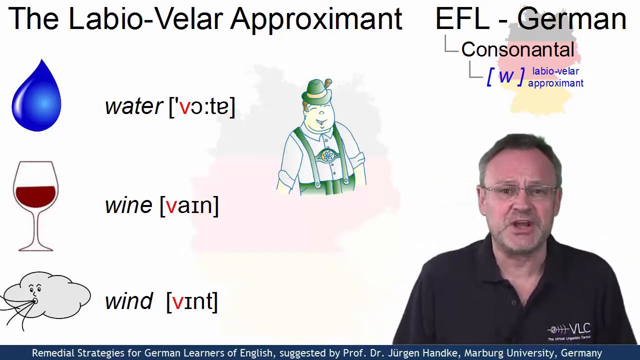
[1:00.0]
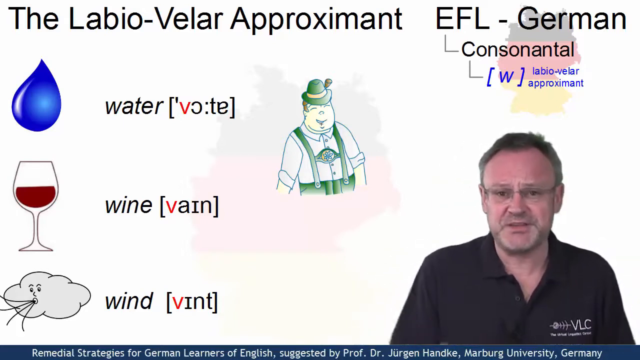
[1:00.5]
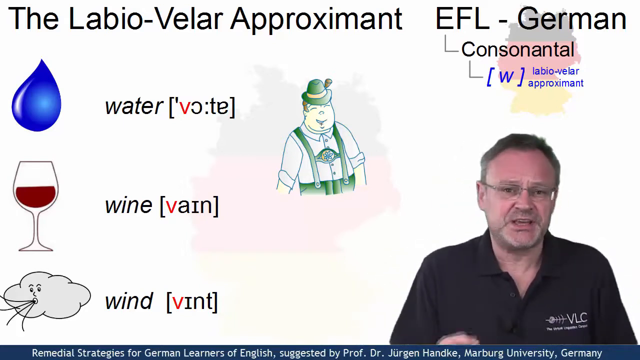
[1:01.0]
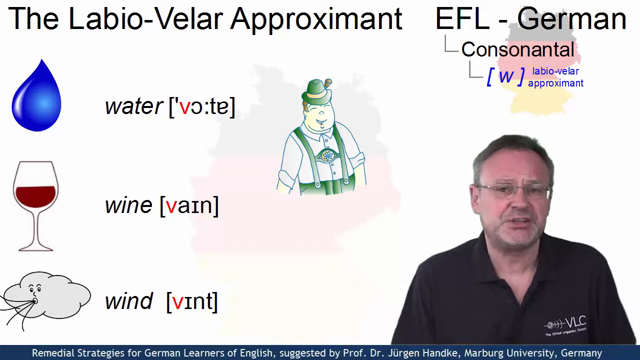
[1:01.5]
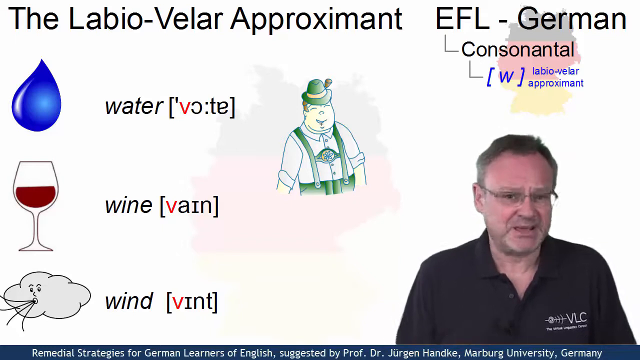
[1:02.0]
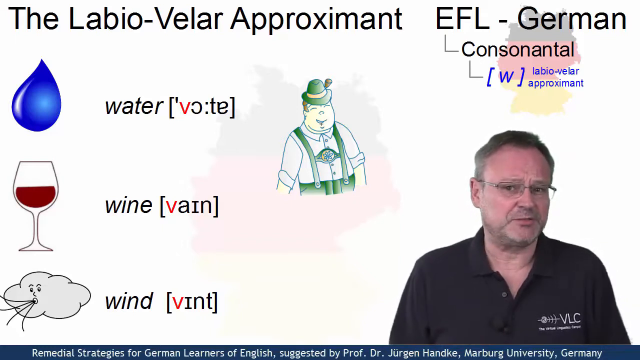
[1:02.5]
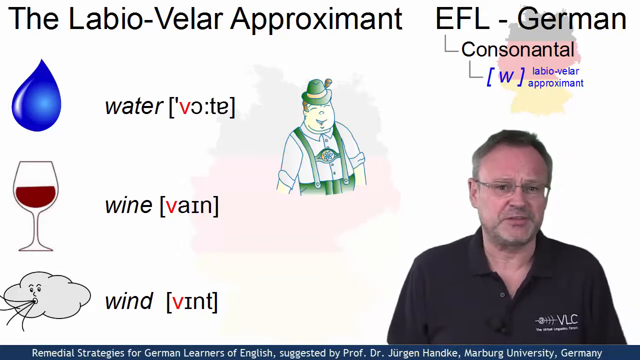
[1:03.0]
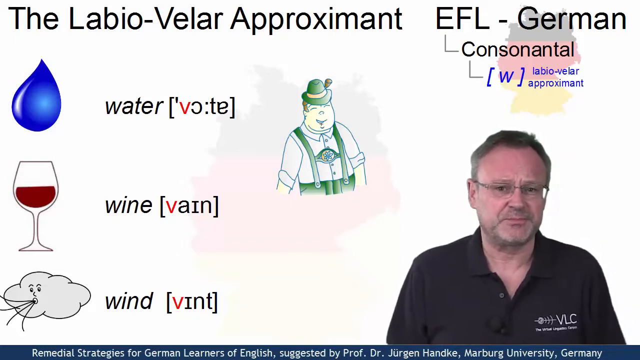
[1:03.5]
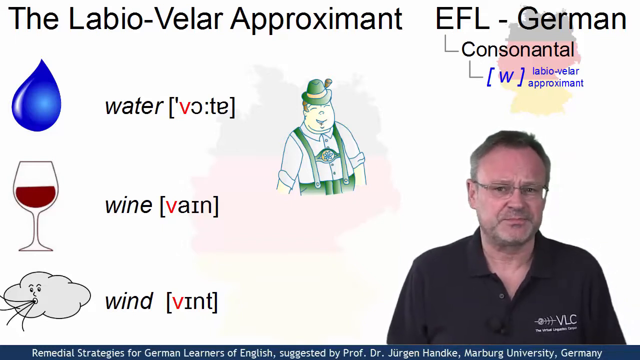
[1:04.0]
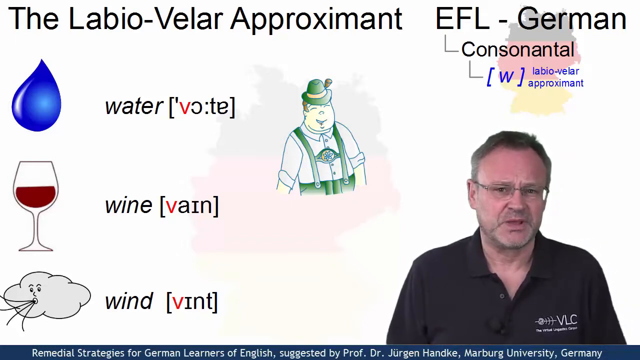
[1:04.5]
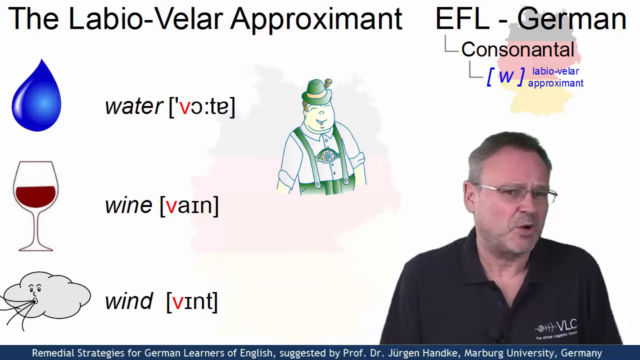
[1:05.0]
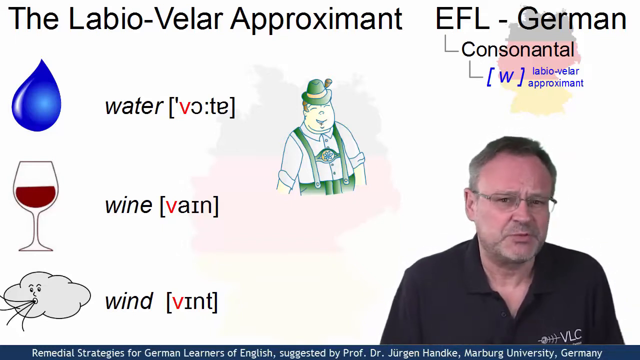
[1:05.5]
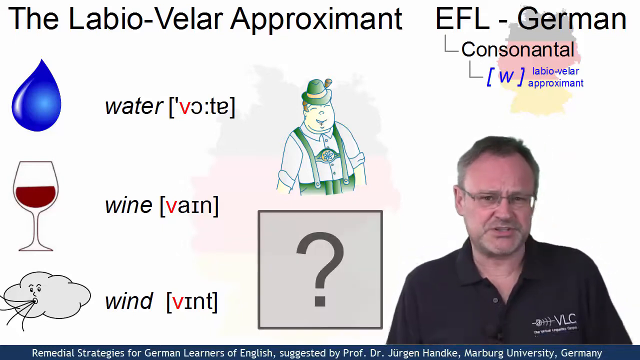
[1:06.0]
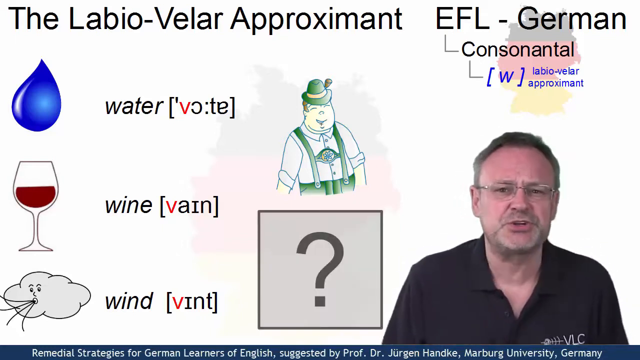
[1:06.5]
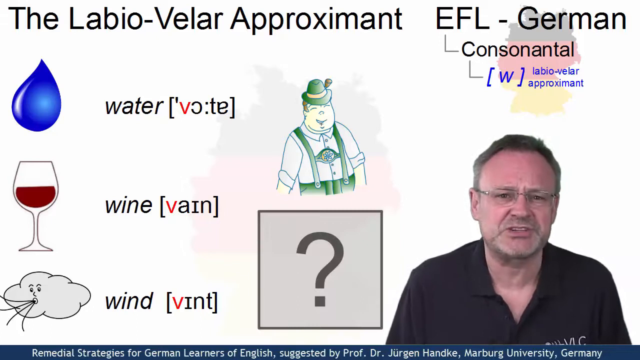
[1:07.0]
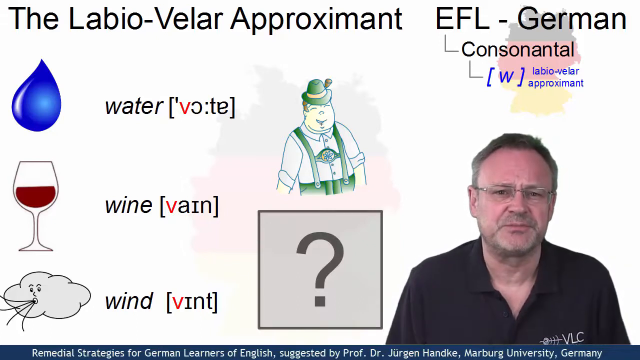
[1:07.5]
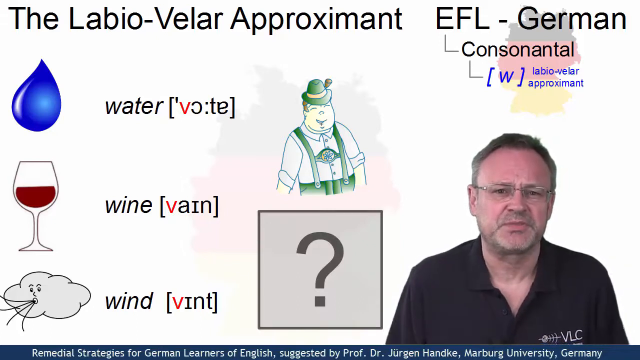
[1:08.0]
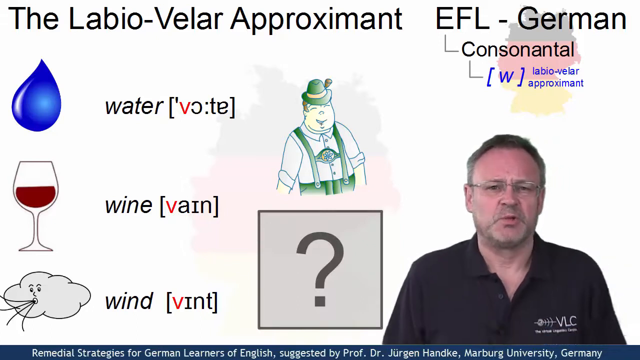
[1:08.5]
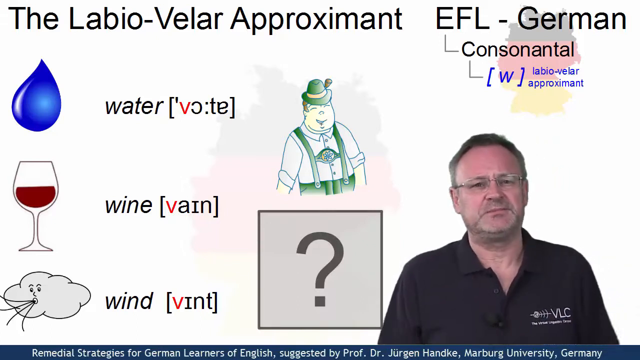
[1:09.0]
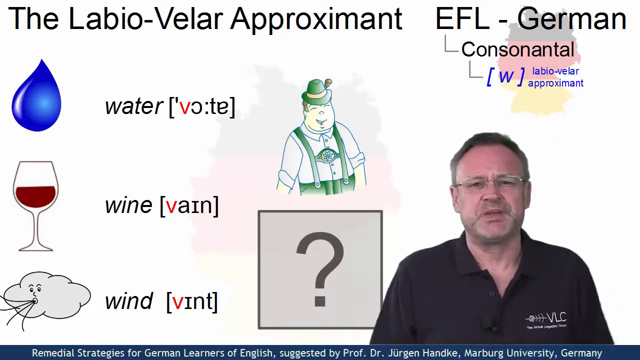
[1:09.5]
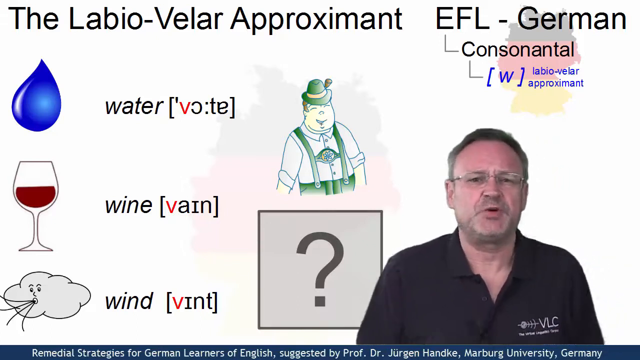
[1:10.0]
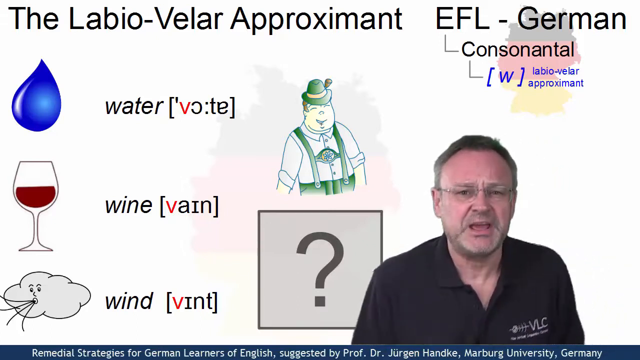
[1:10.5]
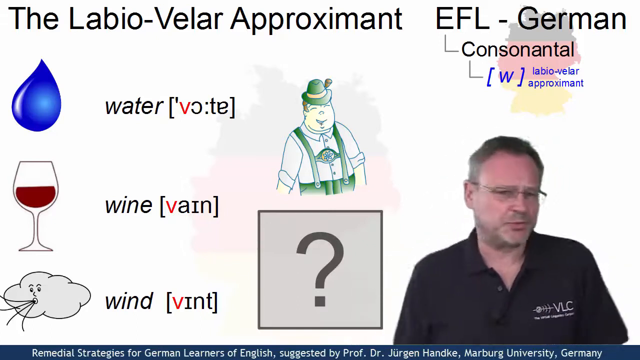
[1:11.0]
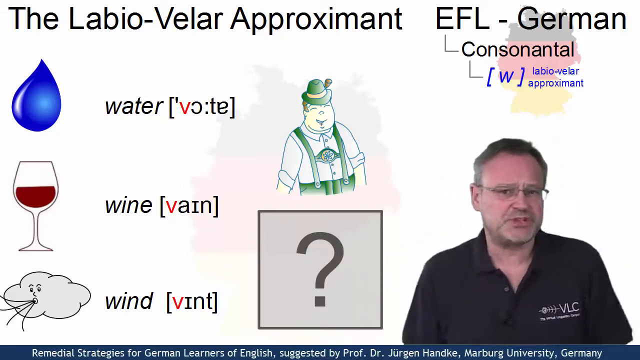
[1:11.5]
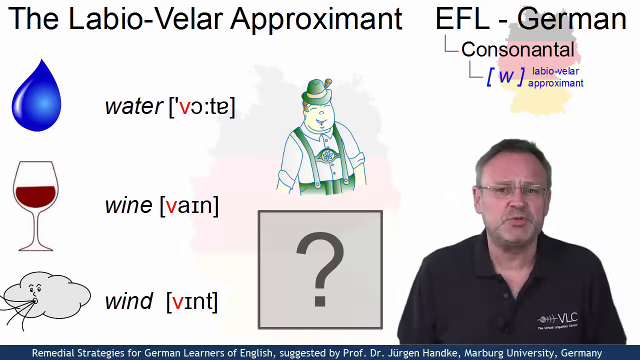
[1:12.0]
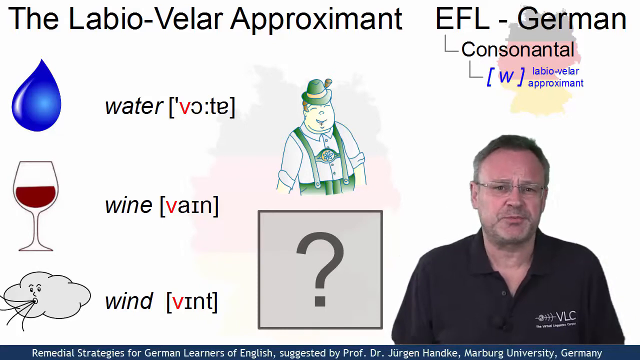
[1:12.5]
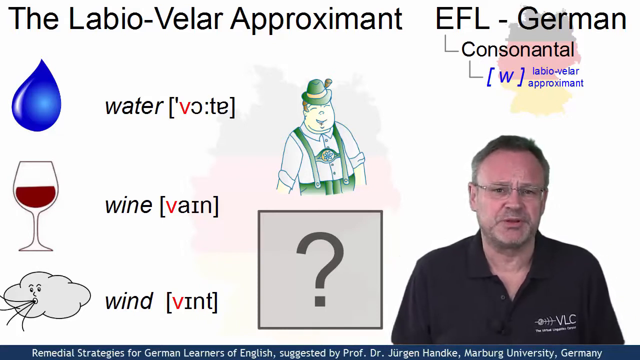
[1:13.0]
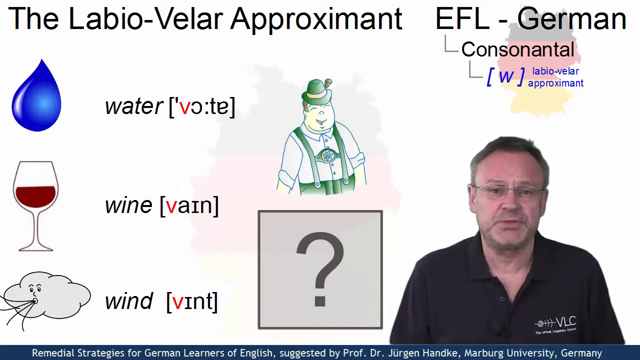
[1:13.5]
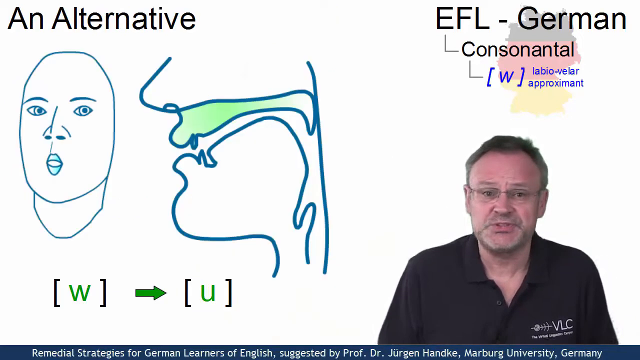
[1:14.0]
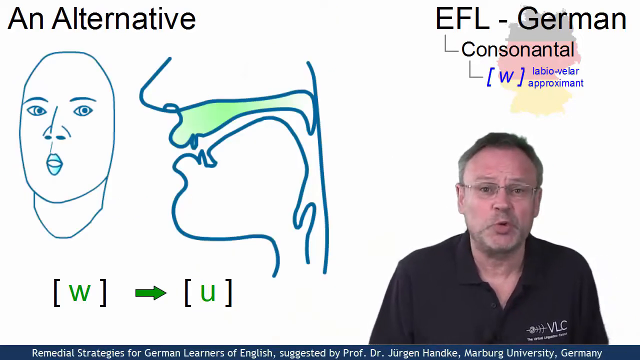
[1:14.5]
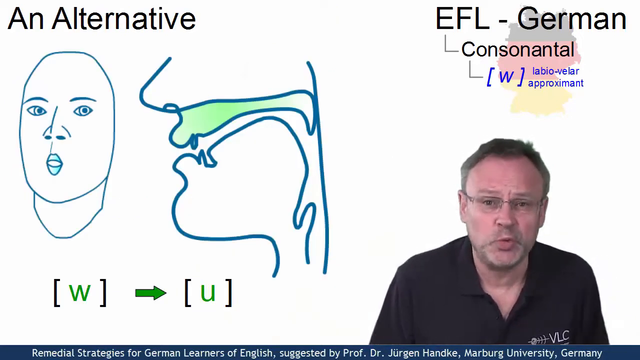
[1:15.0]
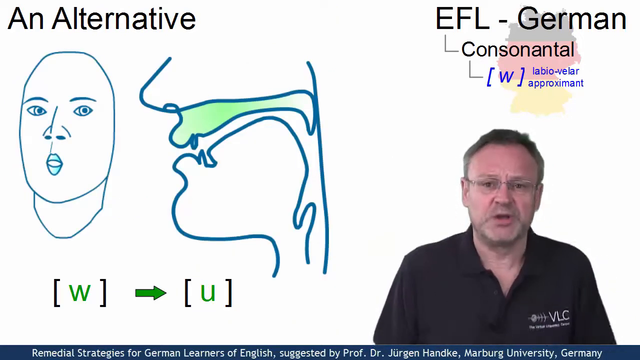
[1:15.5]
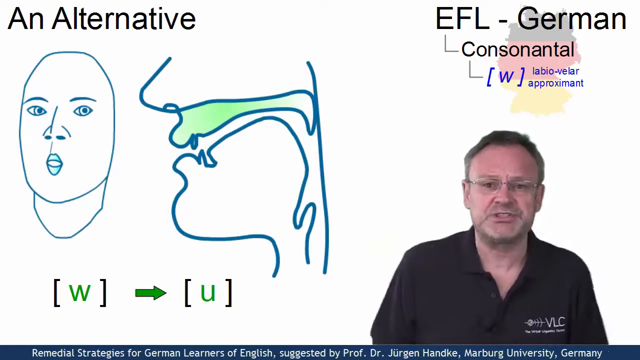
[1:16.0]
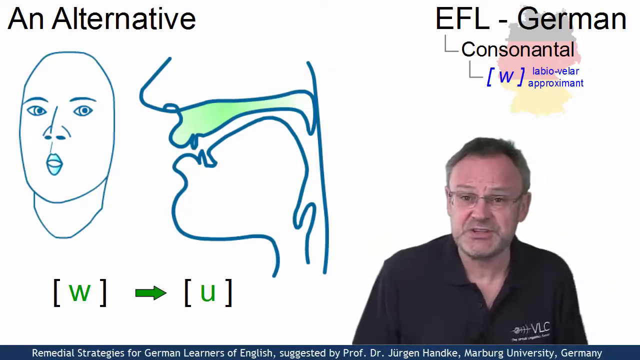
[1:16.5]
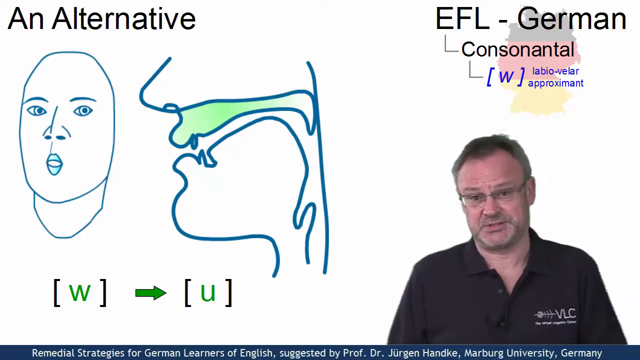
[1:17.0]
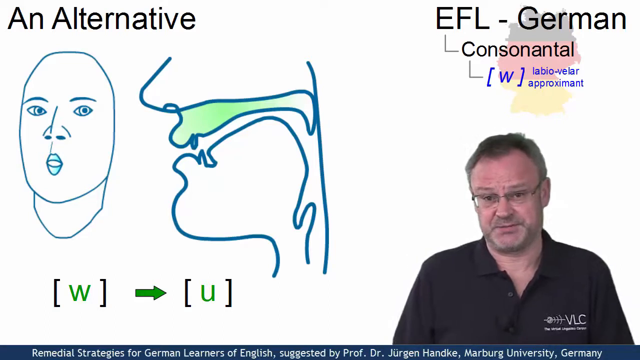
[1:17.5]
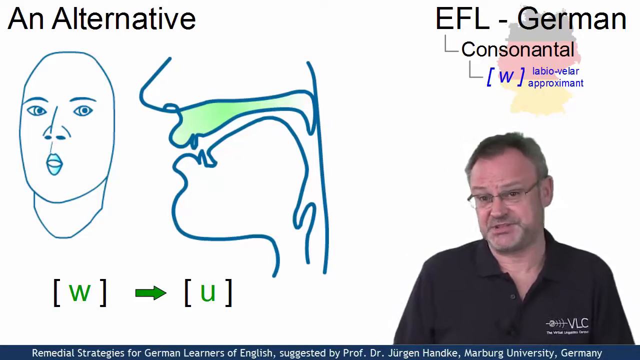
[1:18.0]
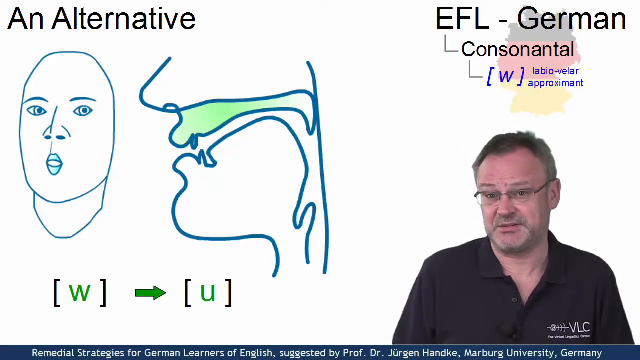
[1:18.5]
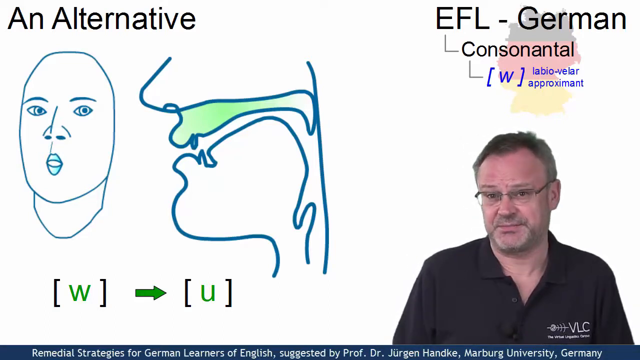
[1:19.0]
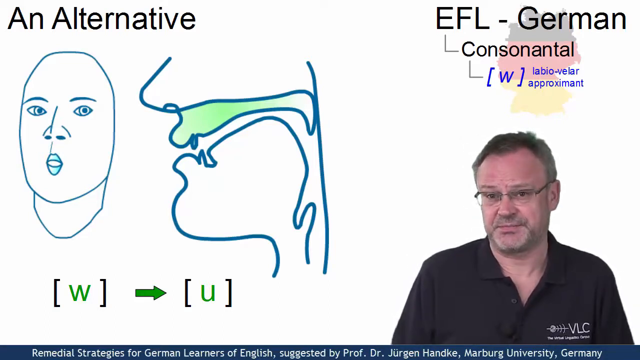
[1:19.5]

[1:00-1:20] The man pronounces the words, making specific mouth shapes for certain vowels and consonants. A question mark appears next to wind and wine. He shows the position the mouth should be in to make the sound. Text in the video reads "Remedial strategies for German learners of English suggested by Professor Dr. Hugon Honke, Marburg University, Germany." The words water, wine and wind are colored, and everything appears hand-drawn. He is sitting, supposedly in his home.